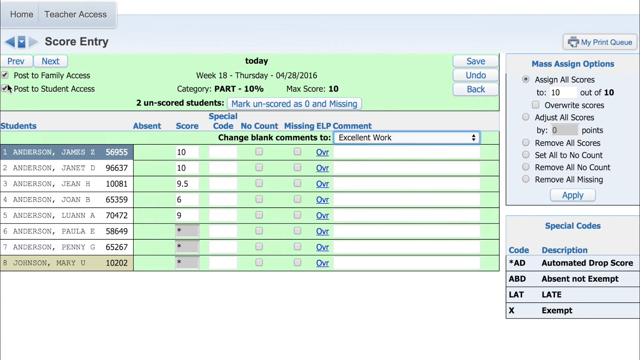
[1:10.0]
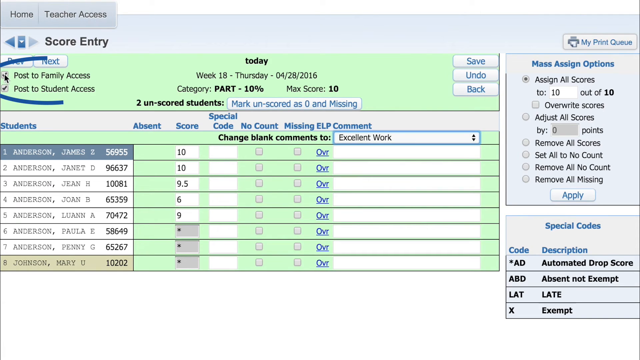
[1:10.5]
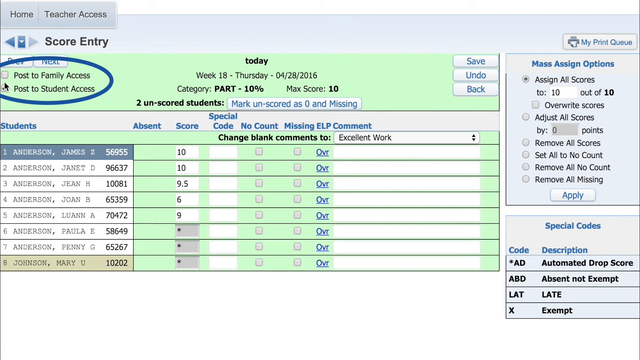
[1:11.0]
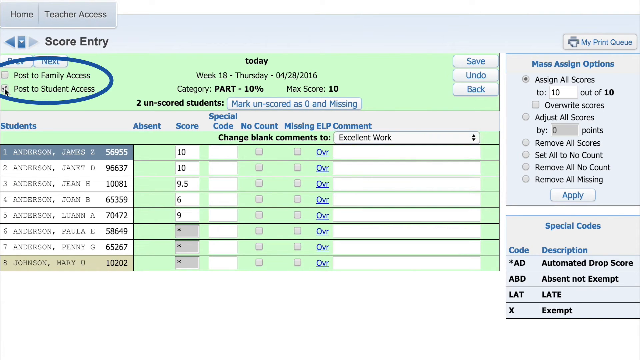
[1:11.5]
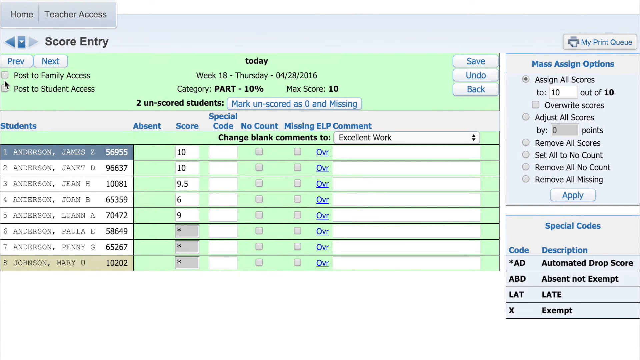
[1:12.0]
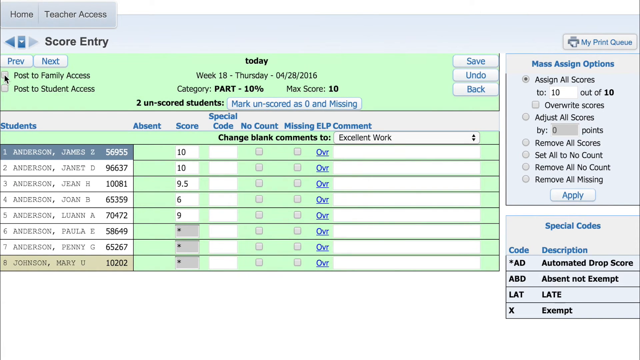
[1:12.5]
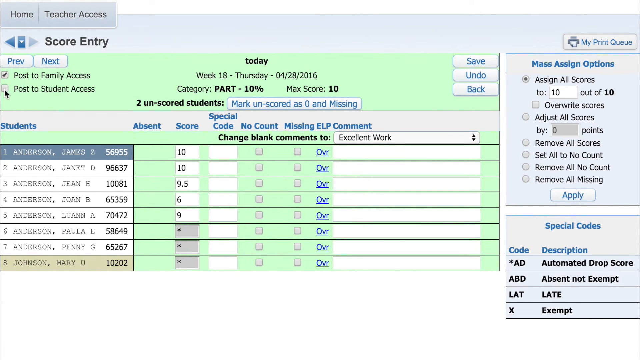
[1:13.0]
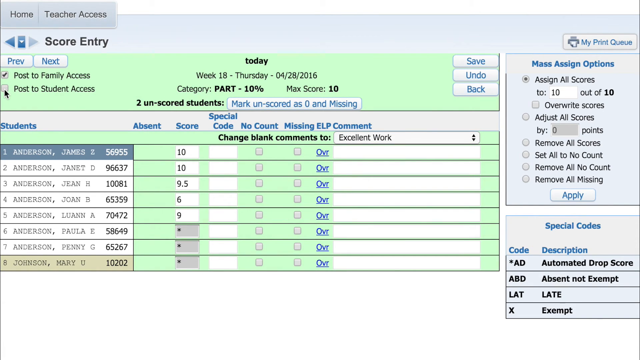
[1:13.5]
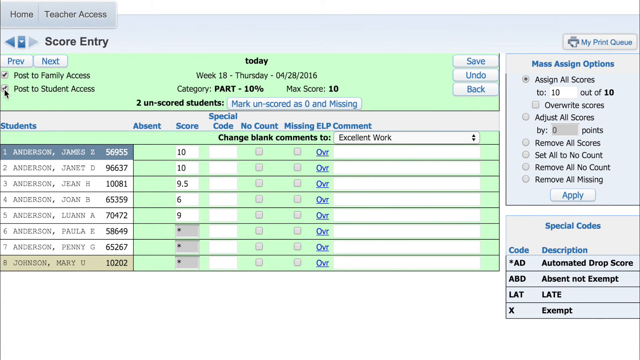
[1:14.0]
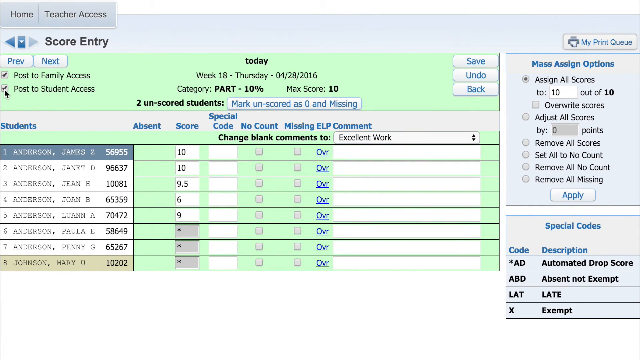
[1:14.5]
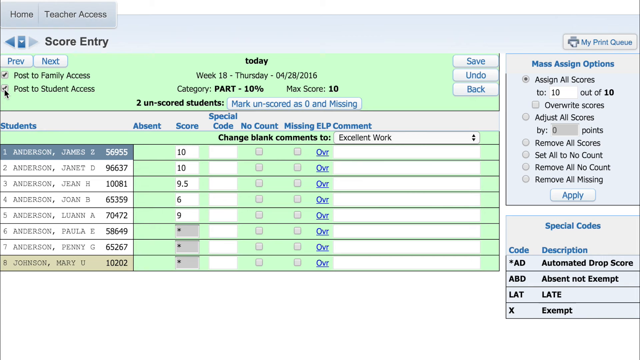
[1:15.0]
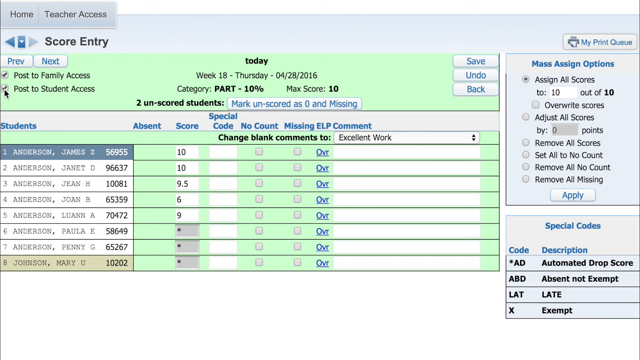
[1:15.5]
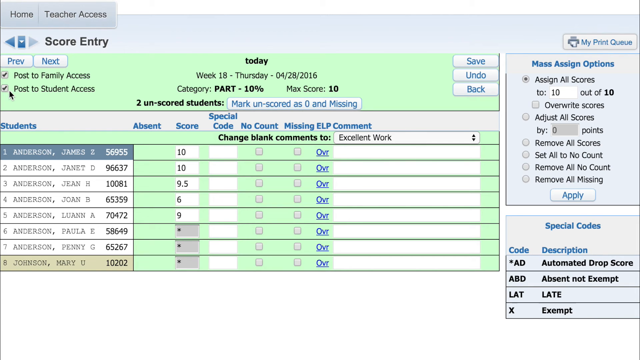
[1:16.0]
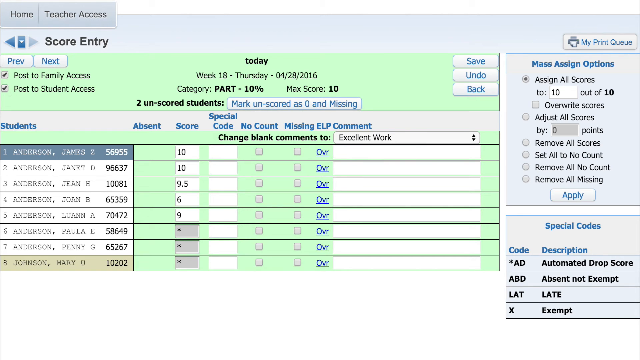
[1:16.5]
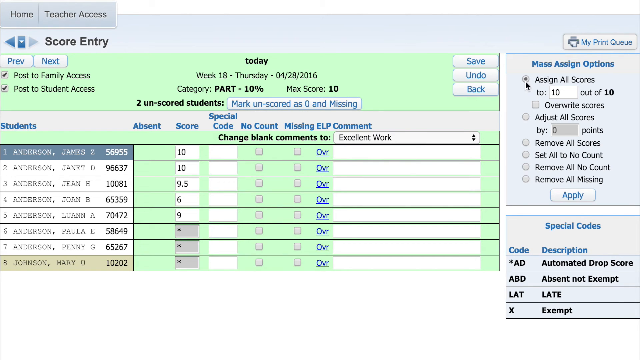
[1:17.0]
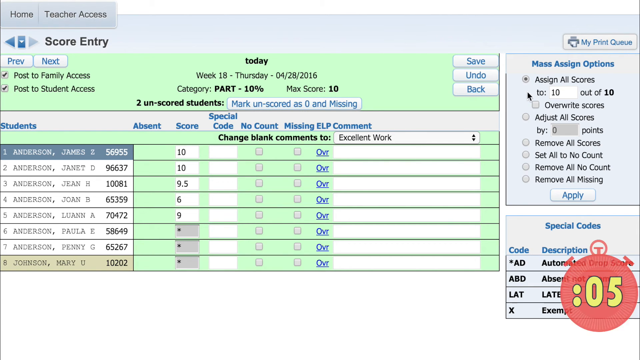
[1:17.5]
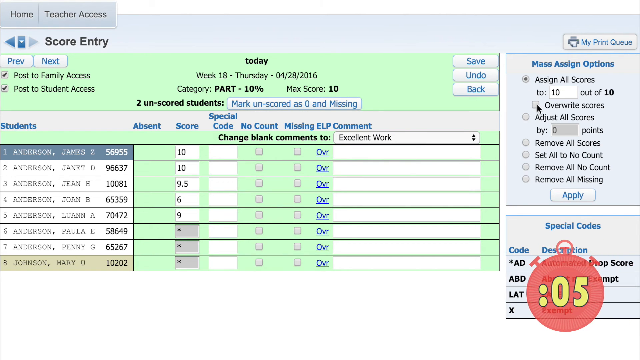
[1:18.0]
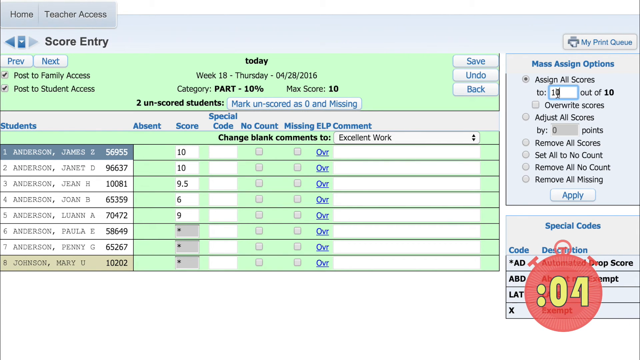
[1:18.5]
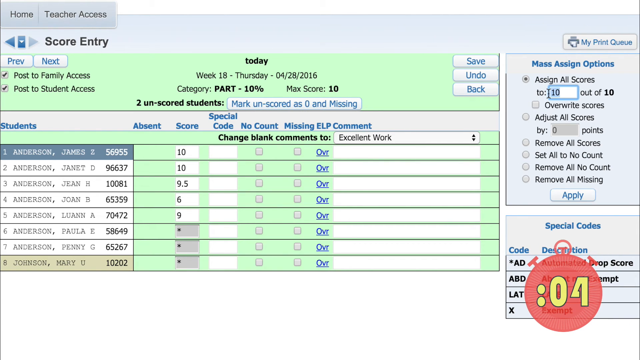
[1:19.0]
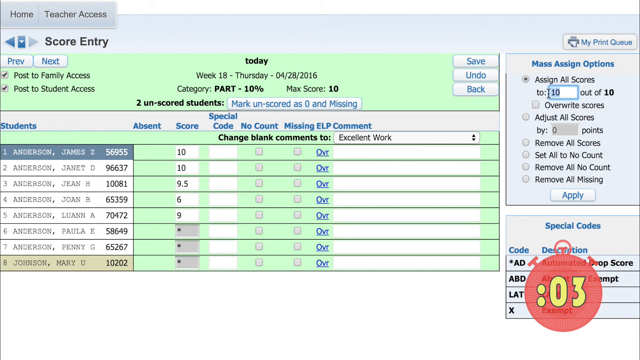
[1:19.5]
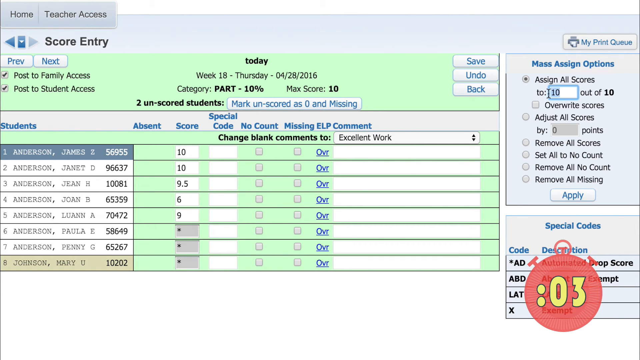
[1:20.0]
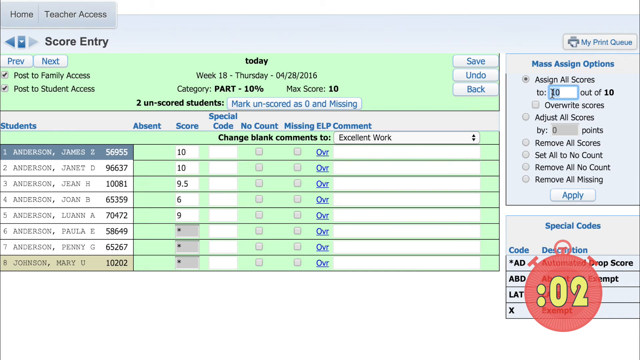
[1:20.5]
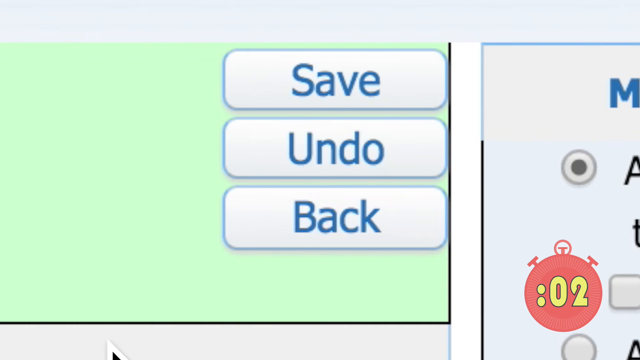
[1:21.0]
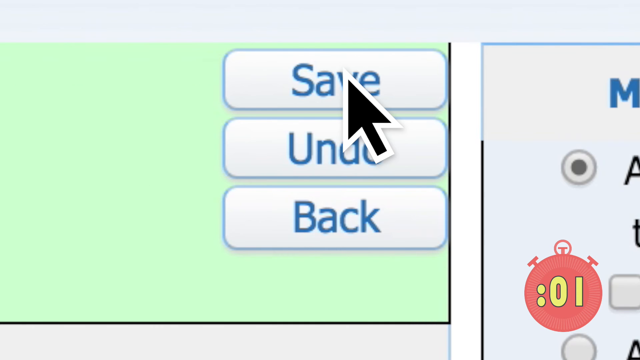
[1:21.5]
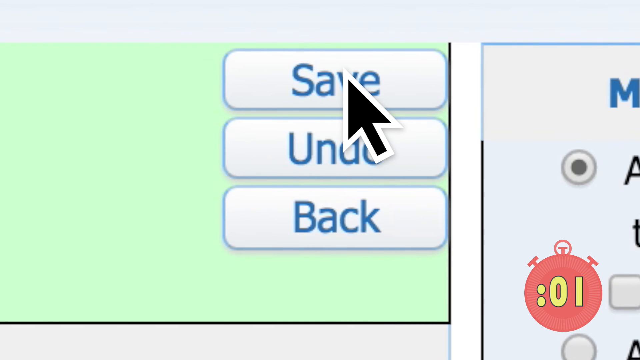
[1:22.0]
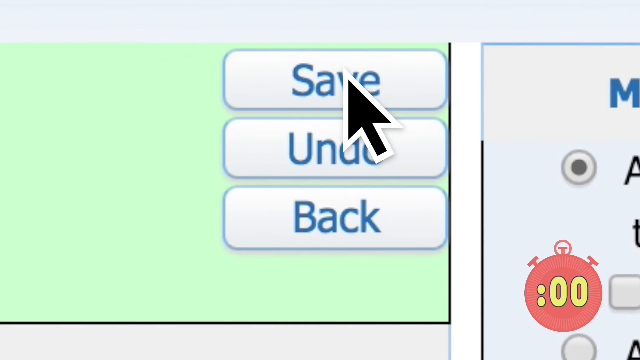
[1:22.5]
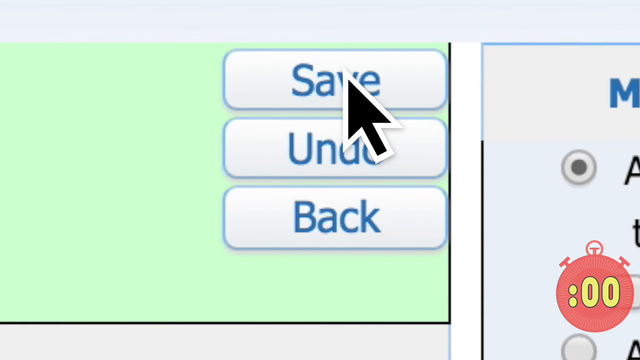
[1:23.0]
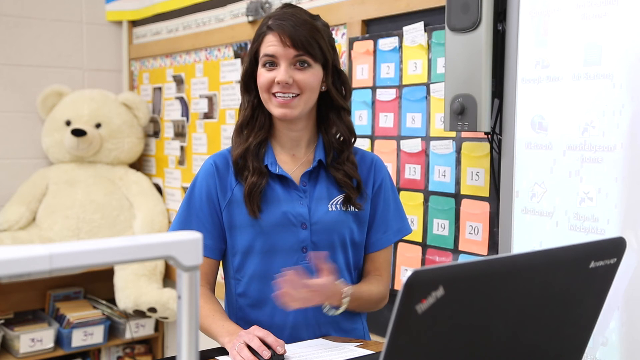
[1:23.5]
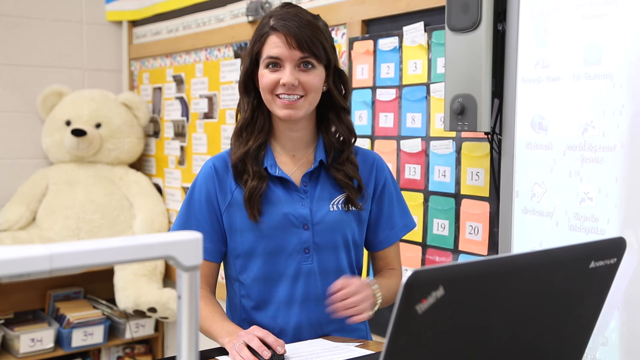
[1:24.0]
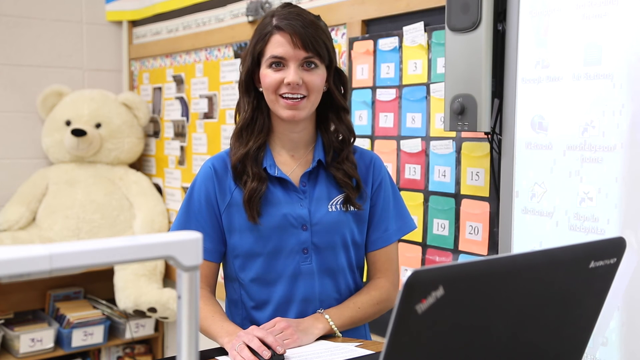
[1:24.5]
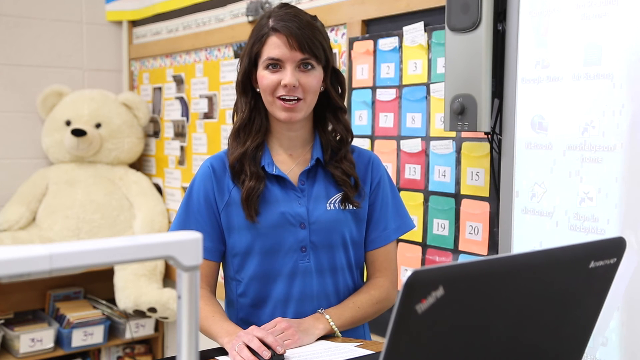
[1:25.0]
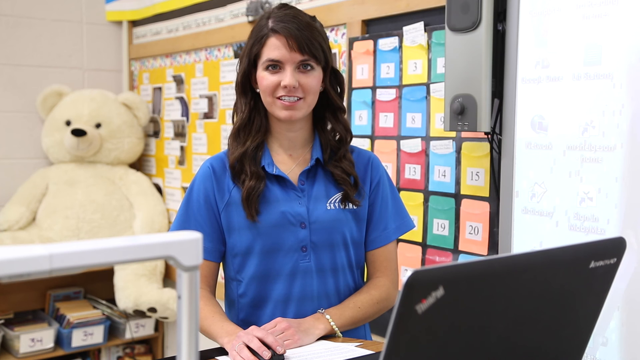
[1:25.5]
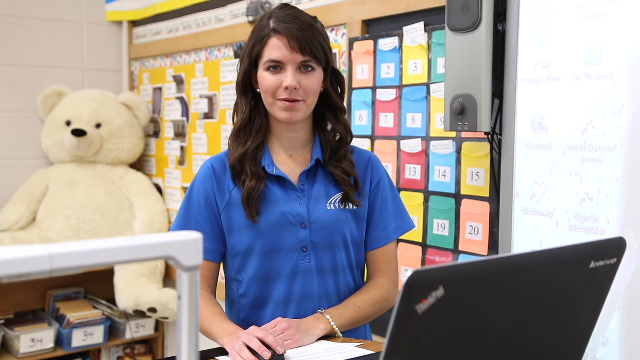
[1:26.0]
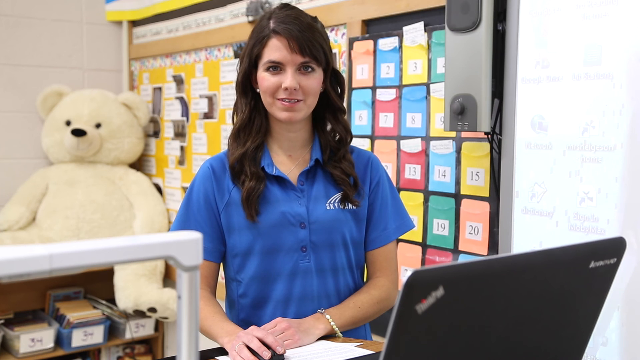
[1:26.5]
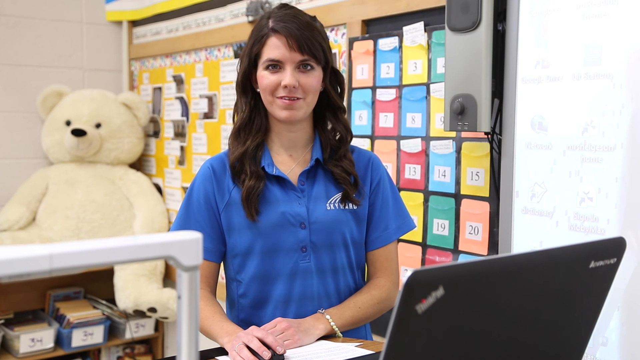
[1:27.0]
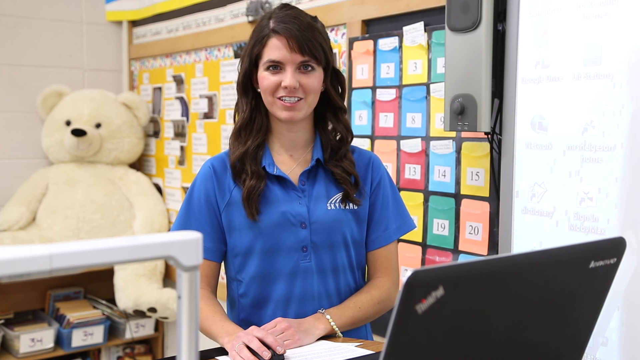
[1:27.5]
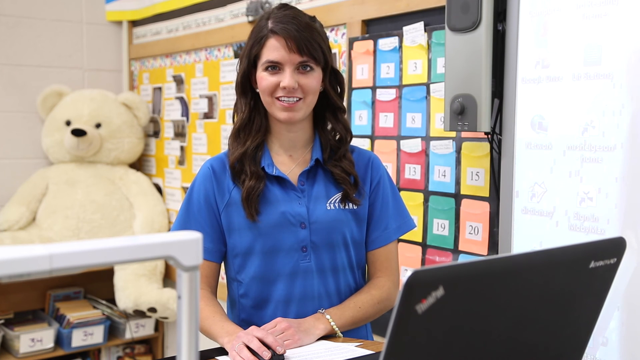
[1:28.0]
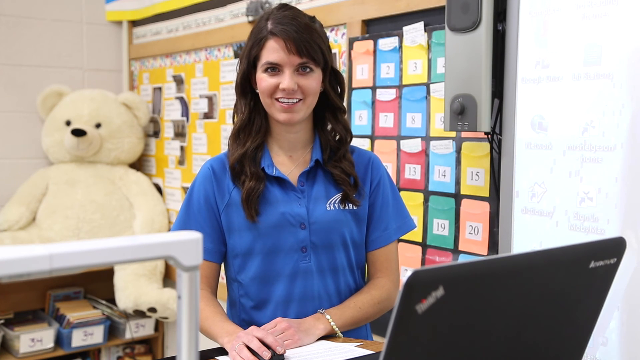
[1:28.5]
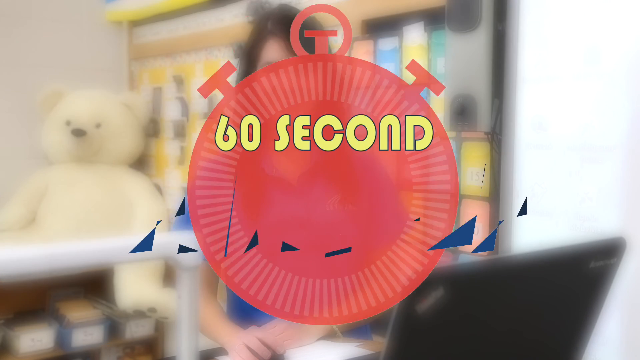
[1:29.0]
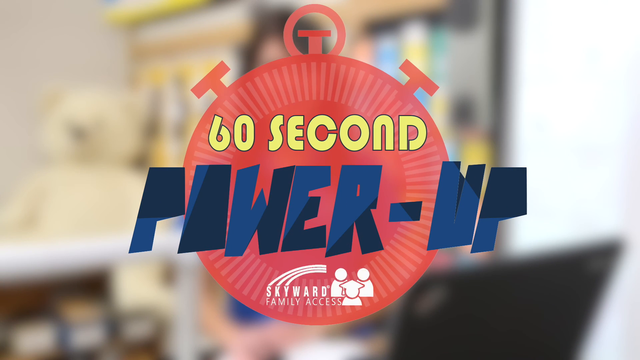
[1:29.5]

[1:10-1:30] The user is on a completely different page with a table on a green background, which contrasts strongly with the blue and gray of the rest of the page. At the top is the title "Score entry". Below it, also on a white background, it says "Today. Week 18, Thursday. April 28th of 2016. Category, part, 10%. Maximum score, 10%." A section states that two students have no qualification, and a button offers to mark them with a zero and as not present. The user then seems to select an option related to changing the comments in white, and several options appear; the user chooses one that says "Excellent work". The green table lists the names of some students, their enrollments, and scores, probably fictitious, ranging from 6 to 10; others have no score written and are filled with an asterisk and red color. The user saves the template just as the seconds on the red timer at the bottom right of the screen run out.